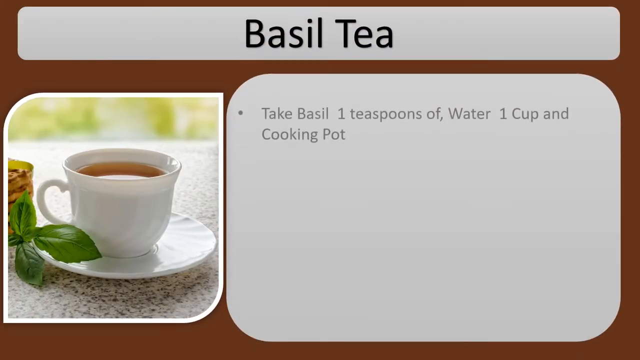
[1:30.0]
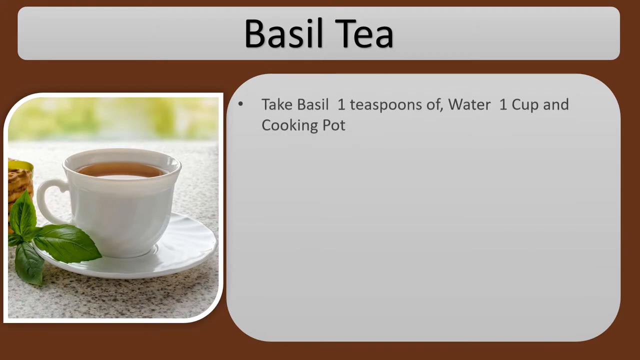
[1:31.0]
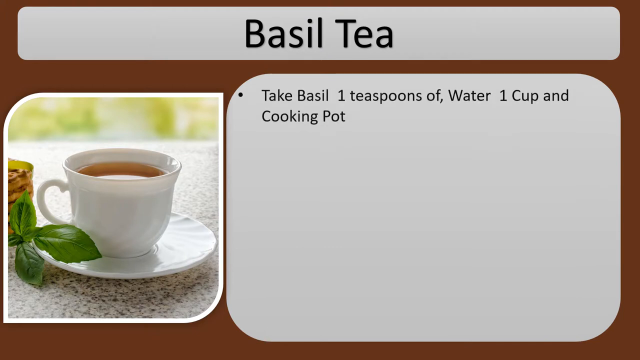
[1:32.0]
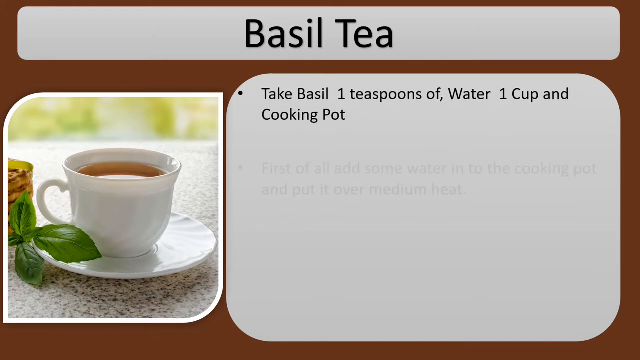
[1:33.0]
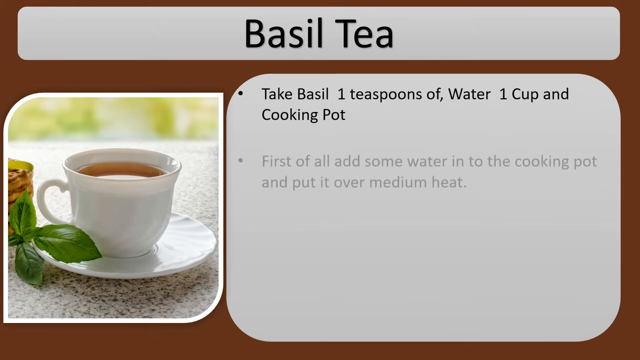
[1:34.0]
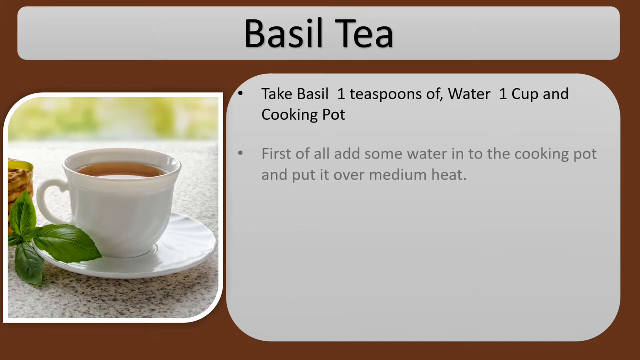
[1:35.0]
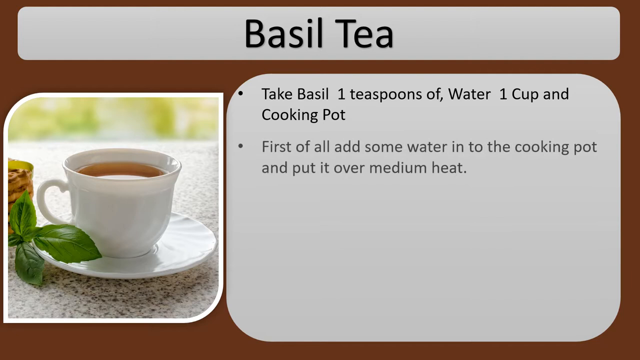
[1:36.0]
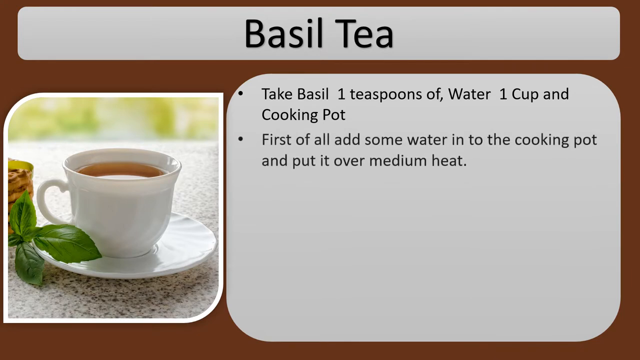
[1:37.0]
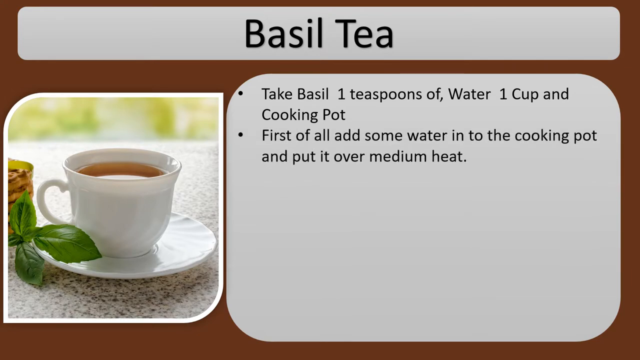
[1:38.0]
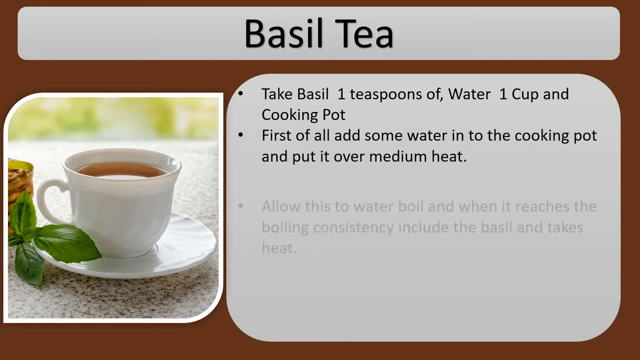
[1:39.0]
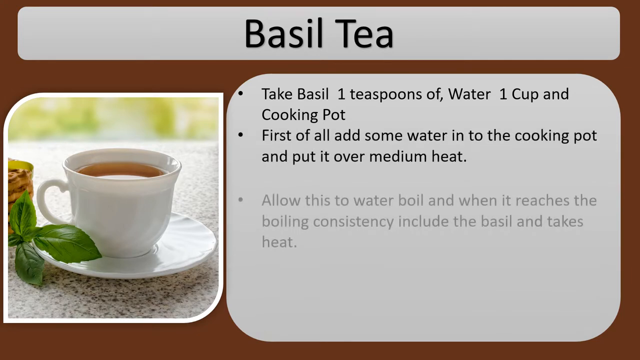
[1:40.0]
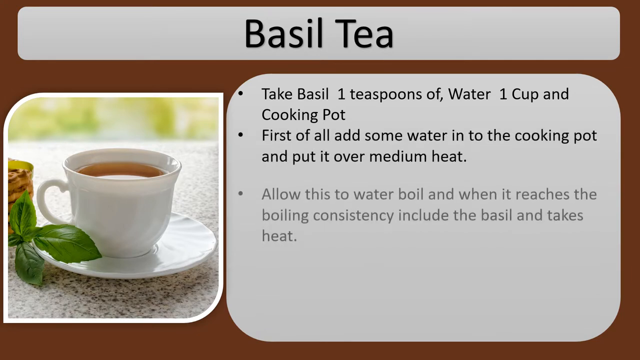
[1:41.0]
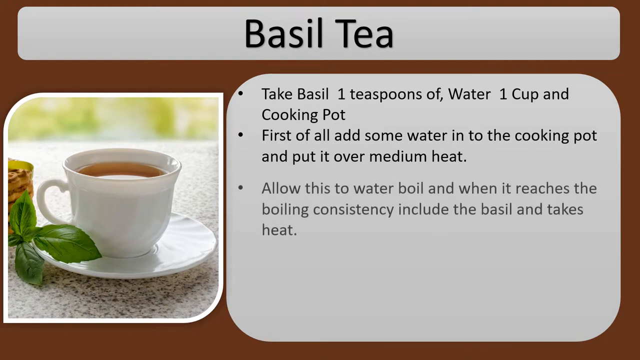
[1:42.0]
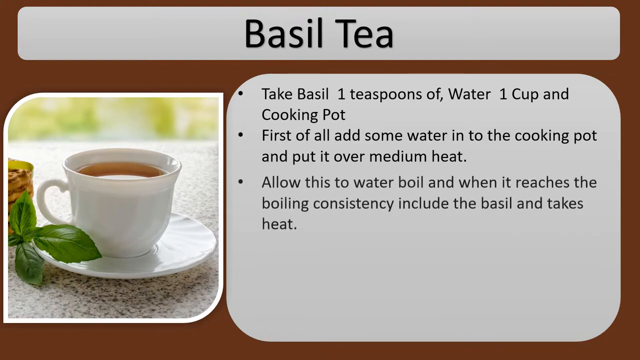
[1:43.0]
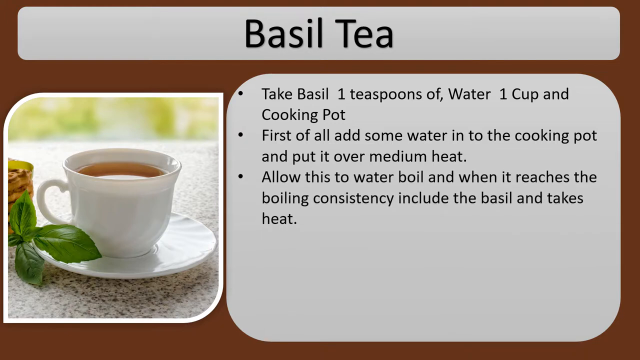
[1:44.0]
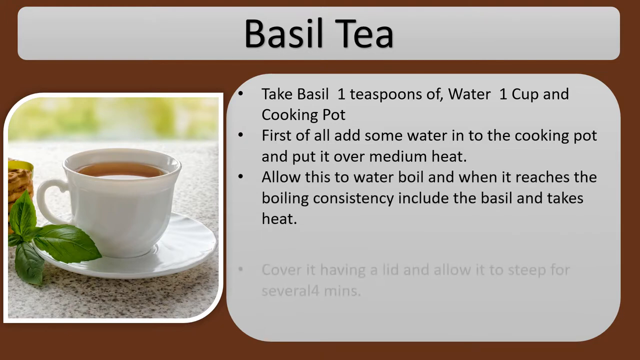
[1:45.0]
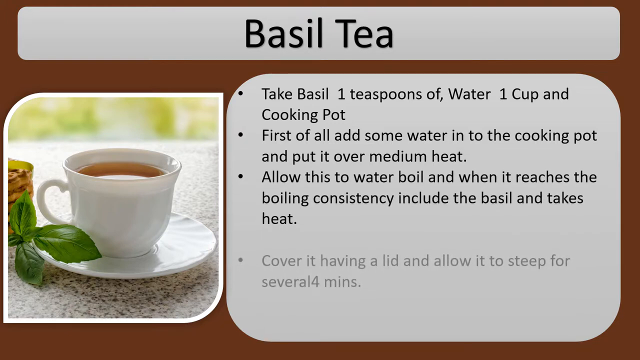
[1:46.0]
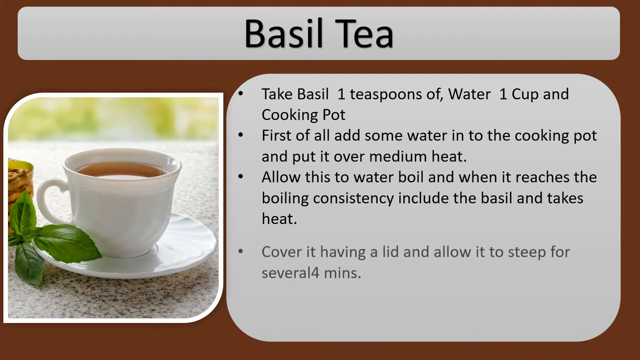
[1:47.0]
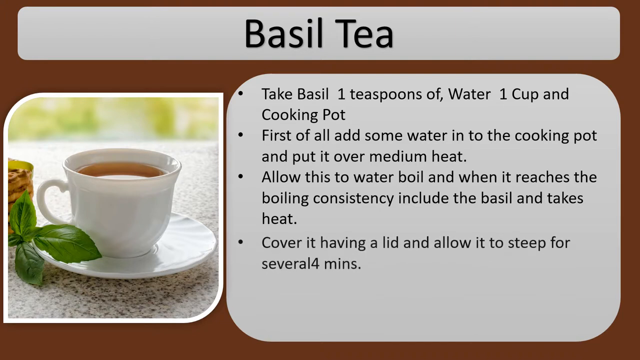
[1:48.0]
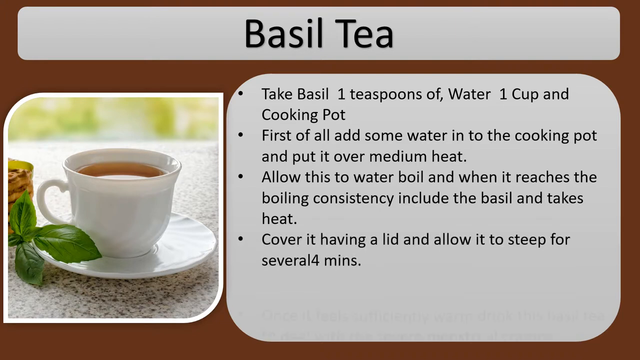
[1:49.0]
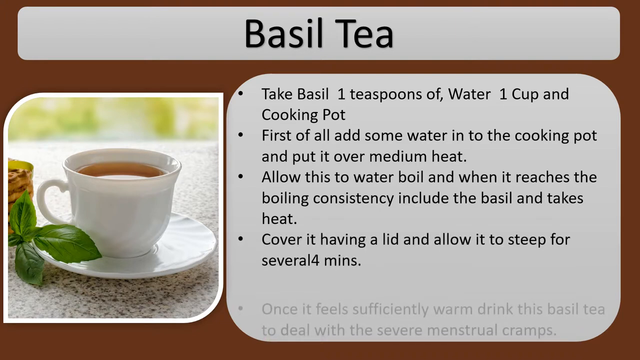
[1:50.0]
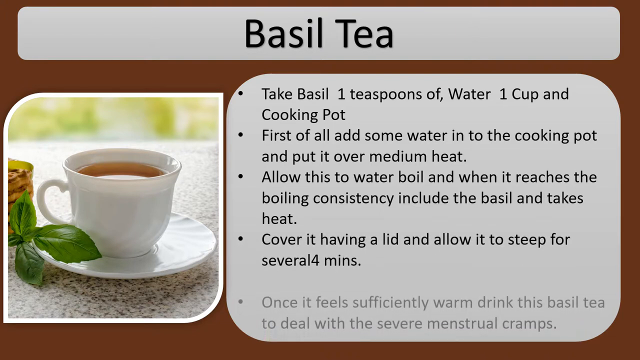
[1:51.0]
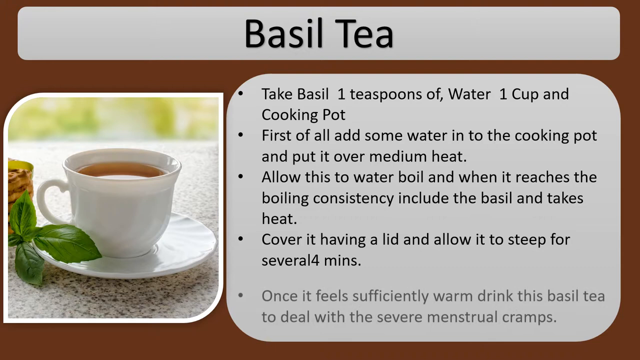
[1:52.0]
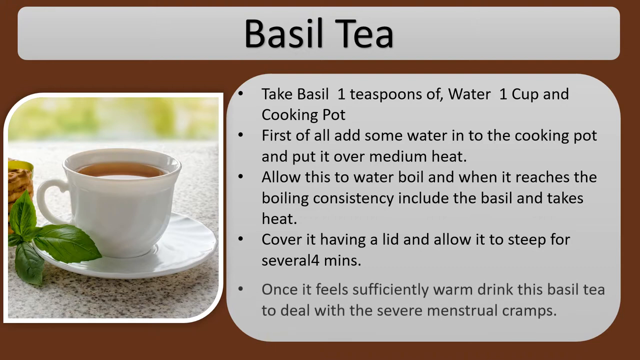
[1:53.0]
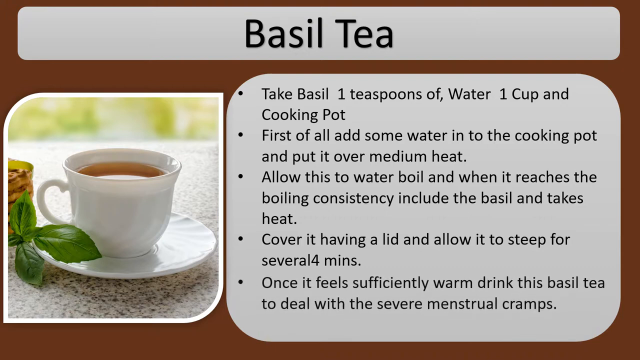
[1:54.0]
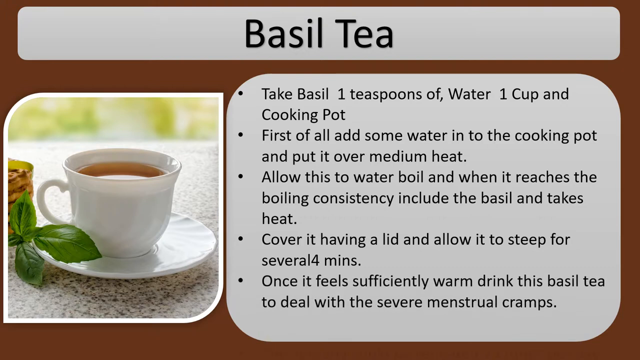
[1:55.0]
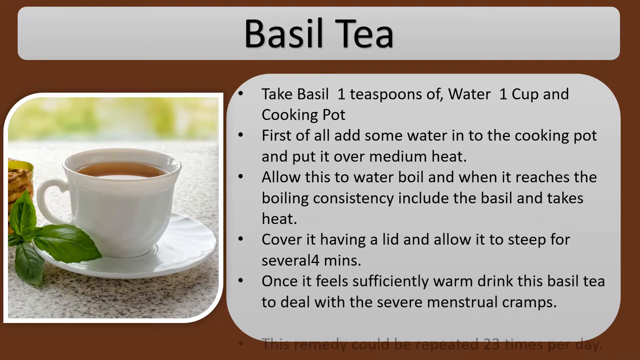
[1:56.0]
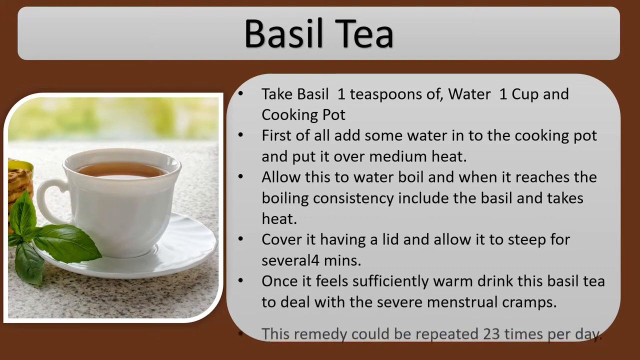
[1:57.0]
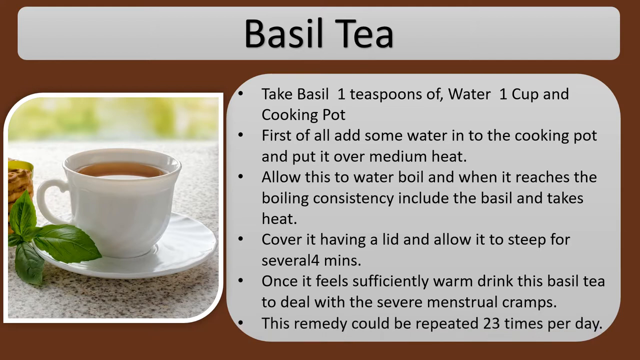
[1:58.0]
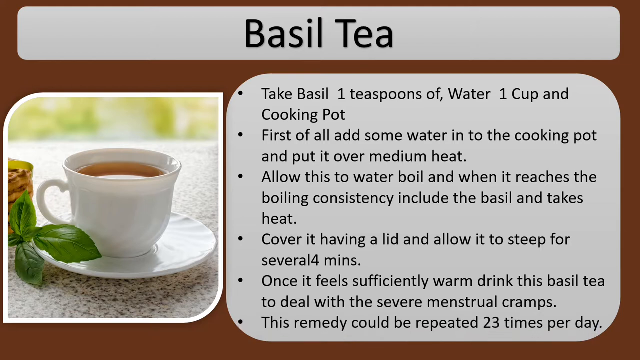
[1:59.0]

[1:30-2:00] More bullet points with instructions for the basil tea come up on the screen, on the same background as before. They read "First of all, add some water into the cooking pot and put it over medium heat," "Allow this water to boil and when it reaches the boiling consistency, include the basil and takes heat," and "Cover it having a lid and allow it to steep for several four minutes," again with no space between "several" and the number four. The next bullet point says "Once it feels sufficiently warm, drink this basil tea to deal with the severe menstrual cramps." The following point reads "This remedy could be repeated 23 times per day."